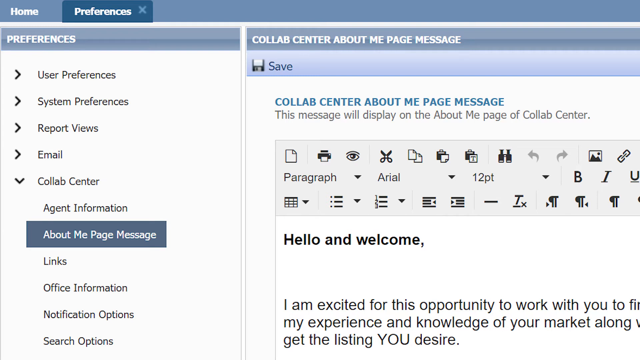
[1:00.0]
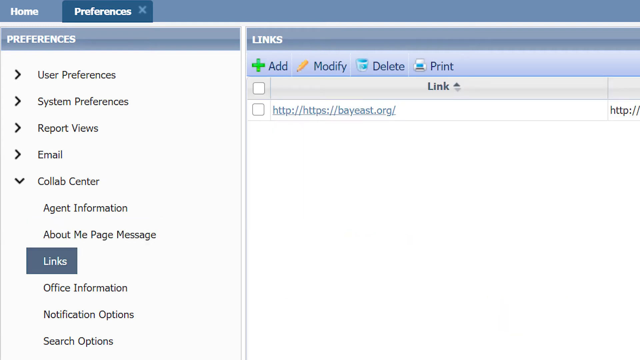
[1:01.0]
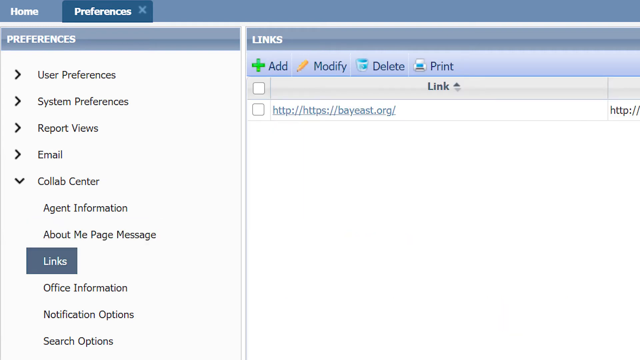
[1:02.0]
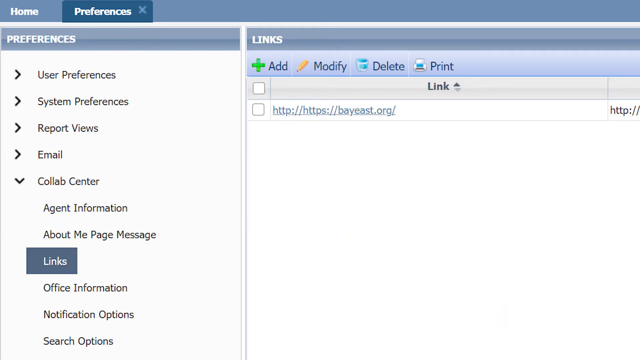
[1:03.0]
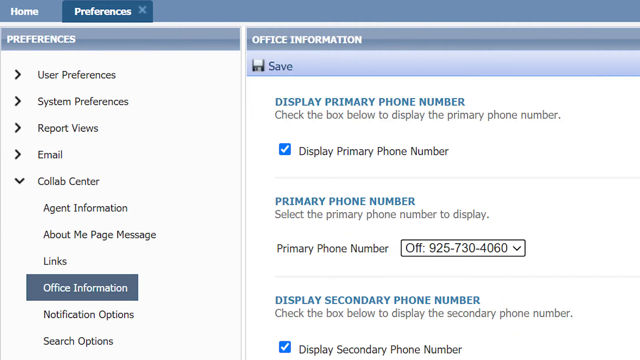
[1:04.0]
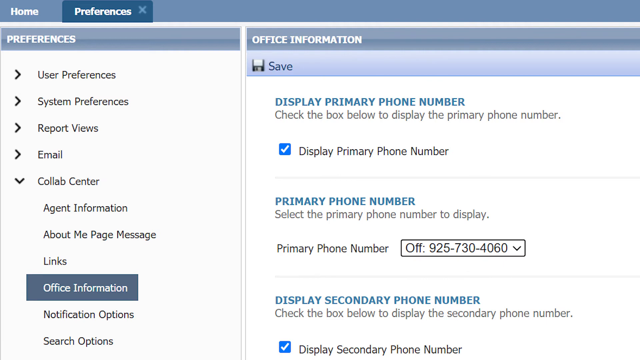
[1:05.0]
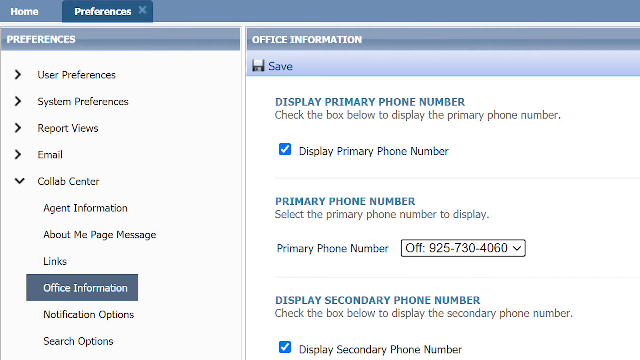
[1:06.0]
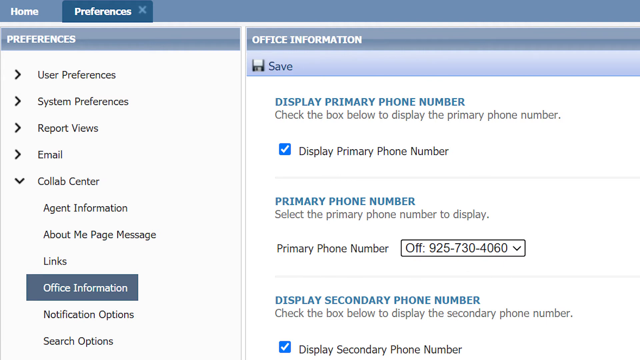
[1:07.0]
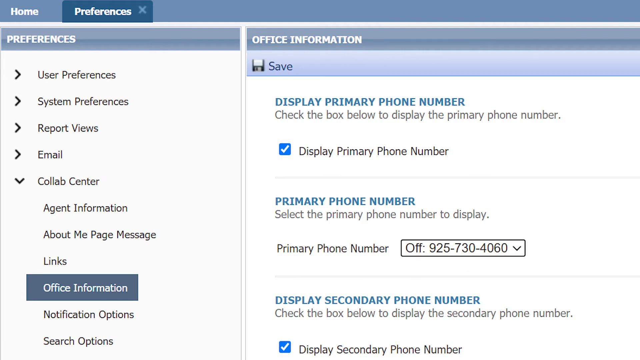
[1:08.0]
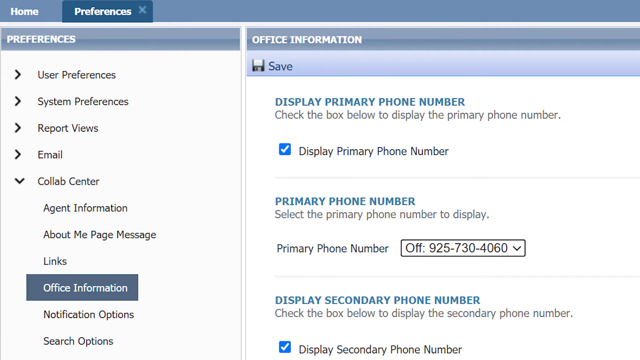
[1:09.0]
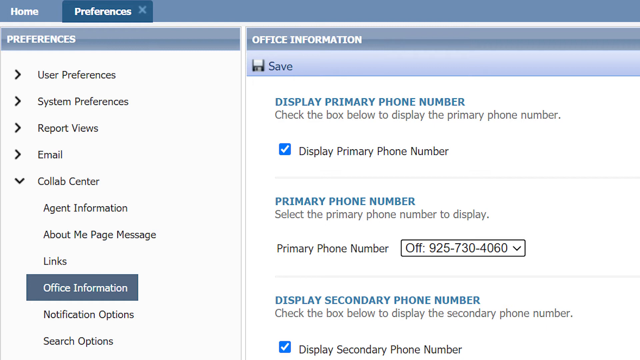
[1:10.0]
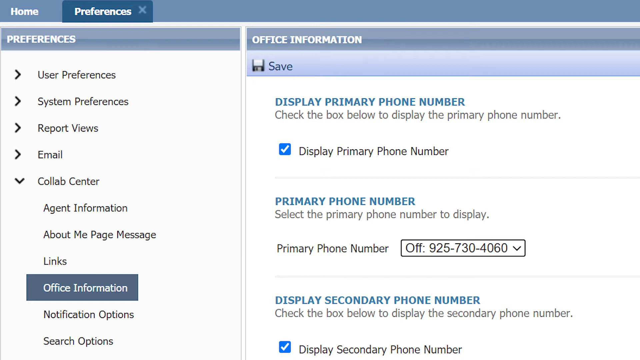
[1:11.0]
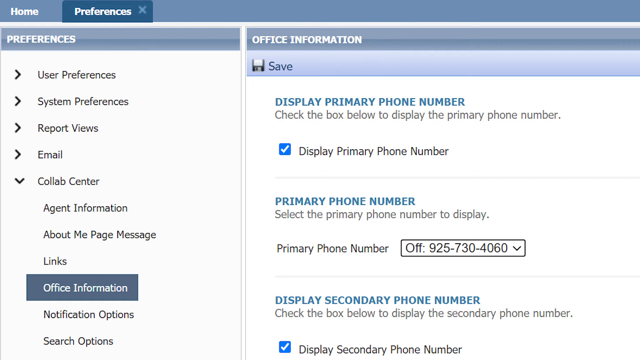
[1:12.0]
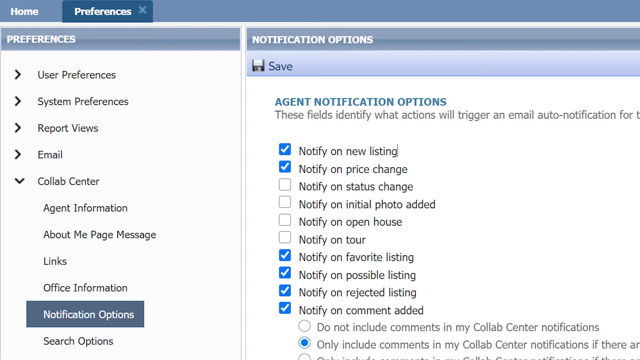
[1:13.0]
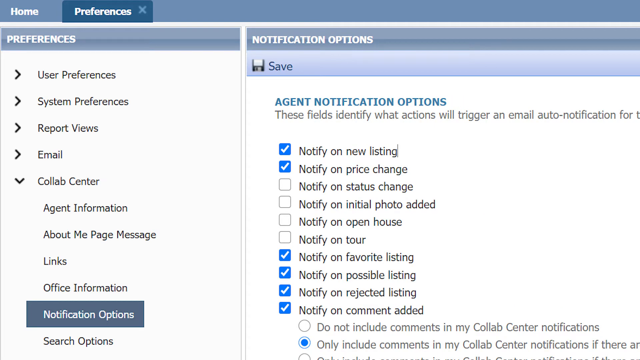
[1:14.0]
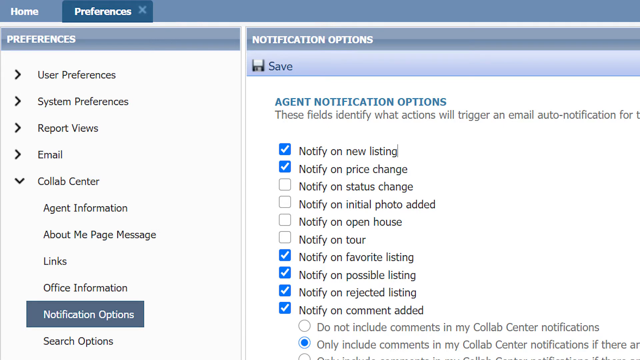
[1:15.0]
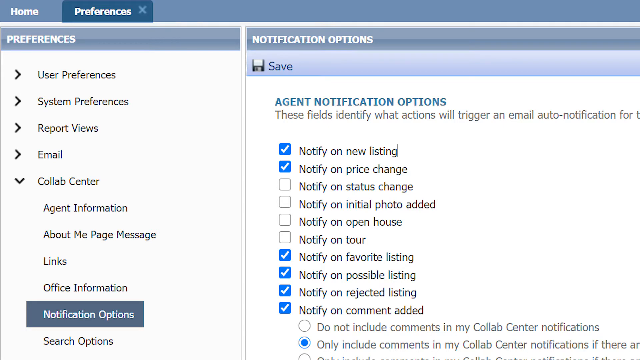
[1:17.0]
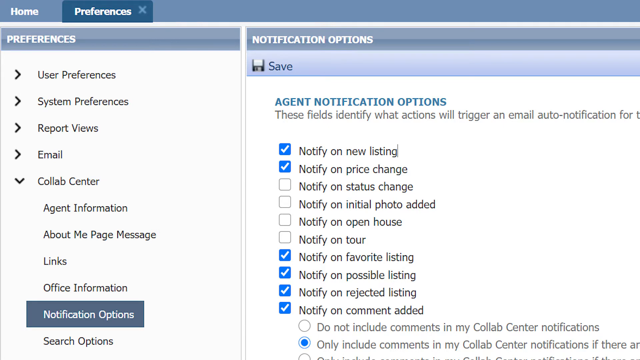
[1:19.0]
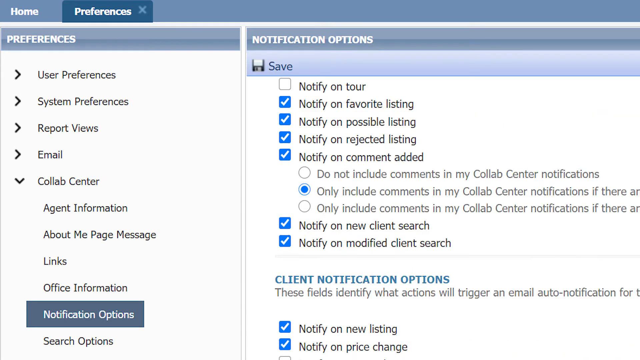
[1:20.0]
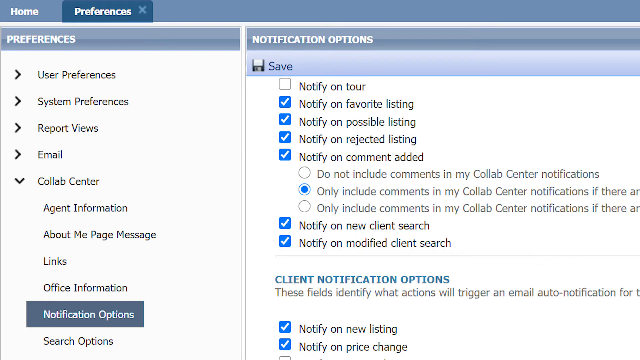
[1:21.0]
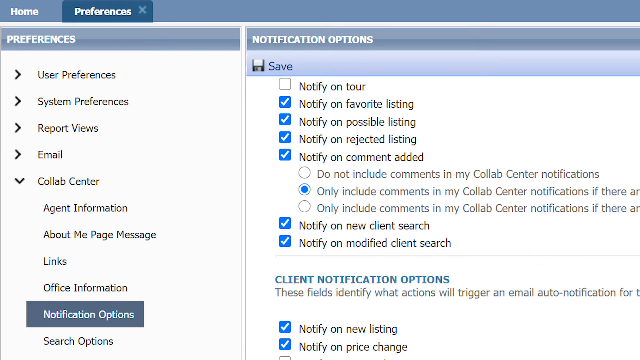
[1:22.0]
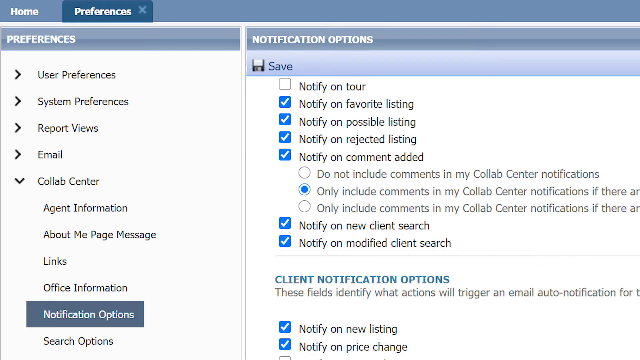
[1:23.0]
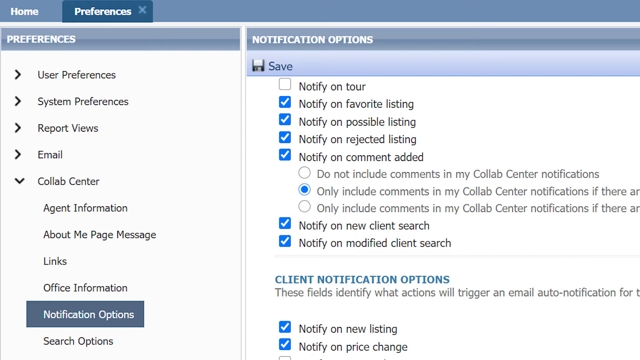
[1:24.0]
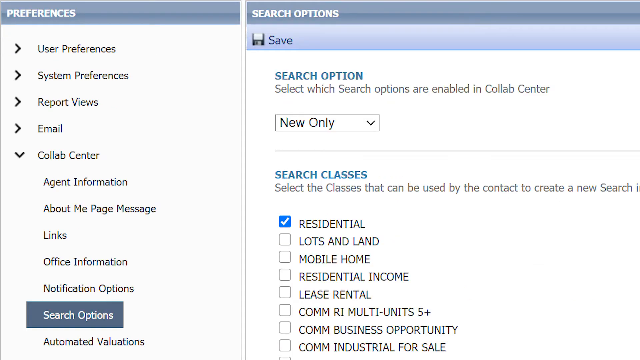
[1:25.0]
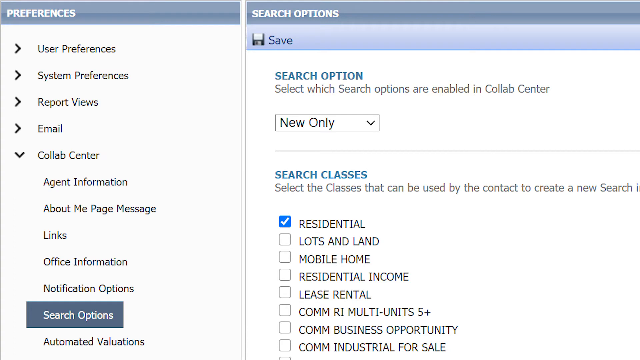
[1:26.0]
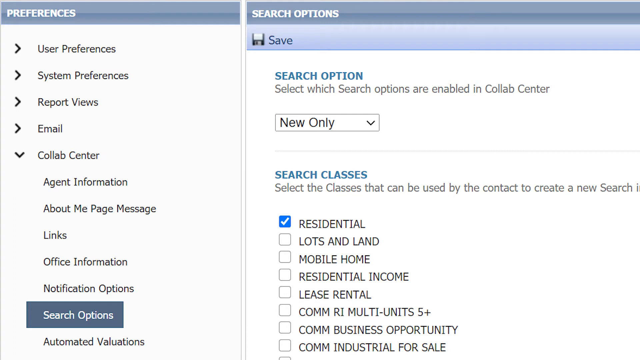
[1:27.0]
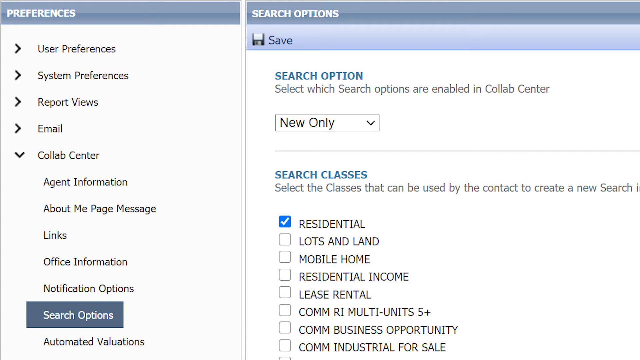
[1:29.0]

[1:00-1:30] The about me page is shown, a page for writing a basic email to send to clients. The user then clicks the links tab, which shows the URL of the website. Next they click the office information tab, where an office phone number can be entered as the primary phone number, with a checked box labeled display primary phone number and an option for displaying a secondary phone number such as a cell phone, which is also checked. They then click the notification options, showing notifications for the agent: notify on new listings, notify on price change, notify on favorite listings, notify on possible listings, notify on rejected listings, and notify on comments added are all checked. Scrolling down a little reveals options for the client, where notify on new listings and notify on price changes are checked. They then go to the search option, which has a drop-down with "new only" selected, and search classes with only residential checked.